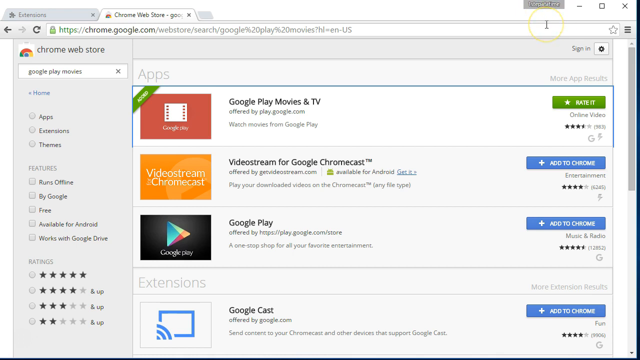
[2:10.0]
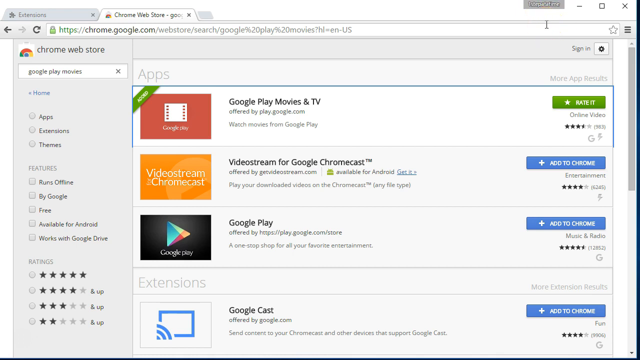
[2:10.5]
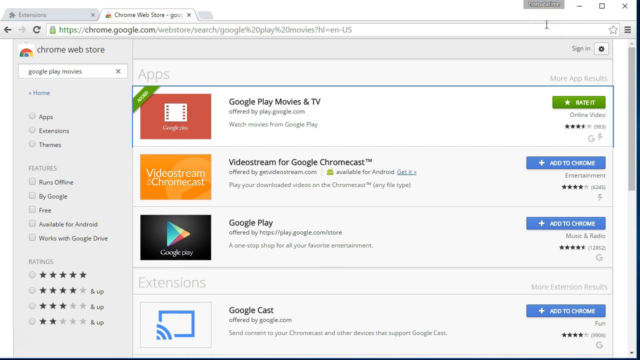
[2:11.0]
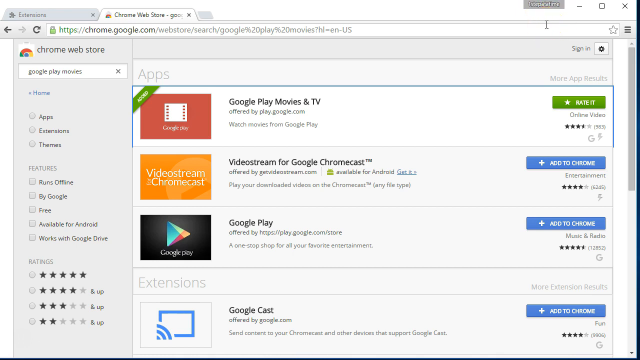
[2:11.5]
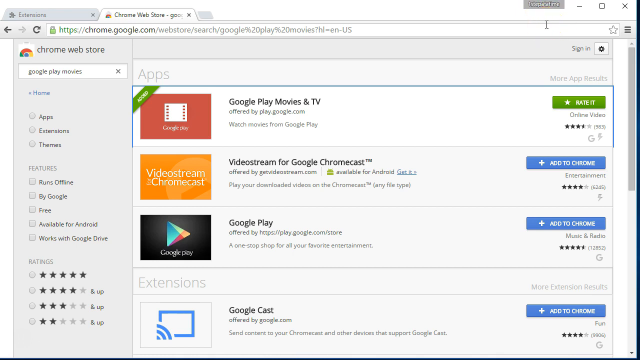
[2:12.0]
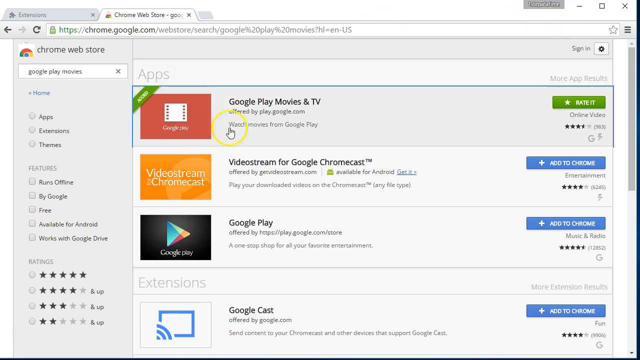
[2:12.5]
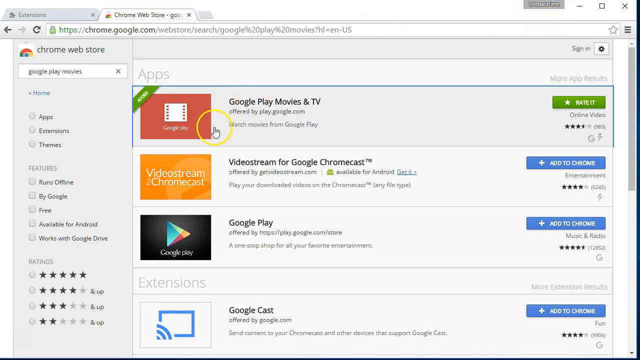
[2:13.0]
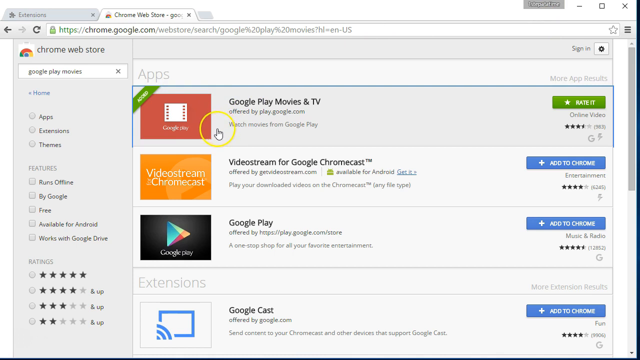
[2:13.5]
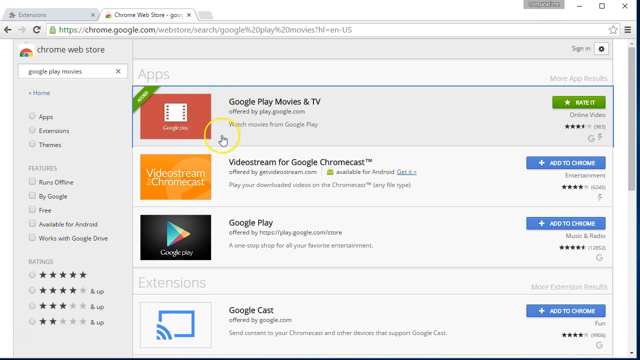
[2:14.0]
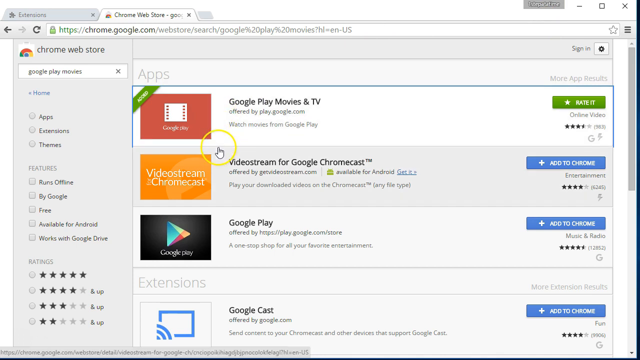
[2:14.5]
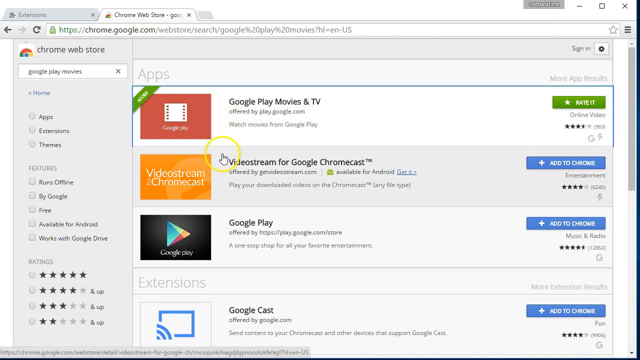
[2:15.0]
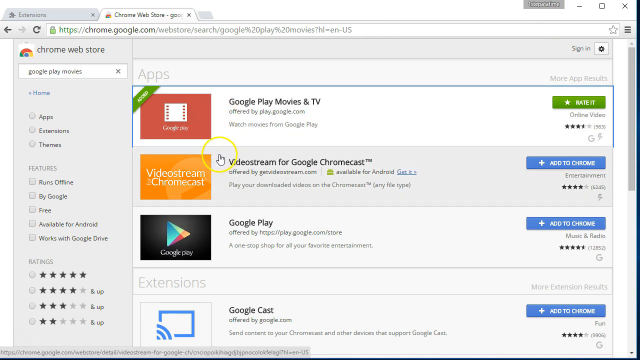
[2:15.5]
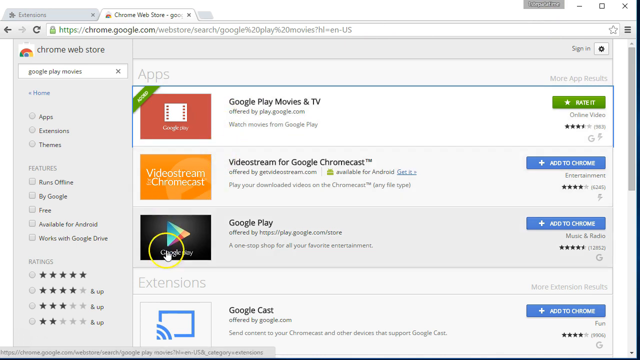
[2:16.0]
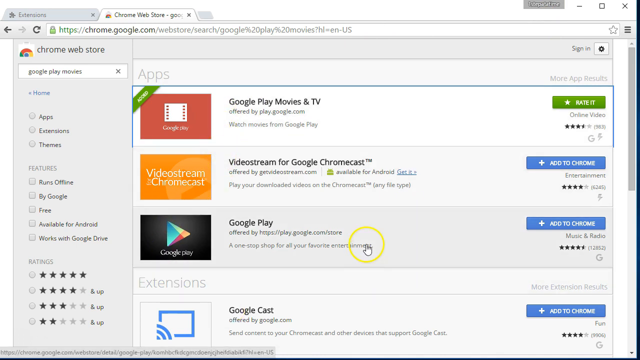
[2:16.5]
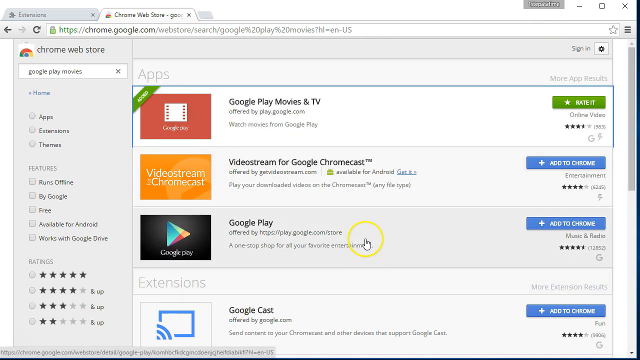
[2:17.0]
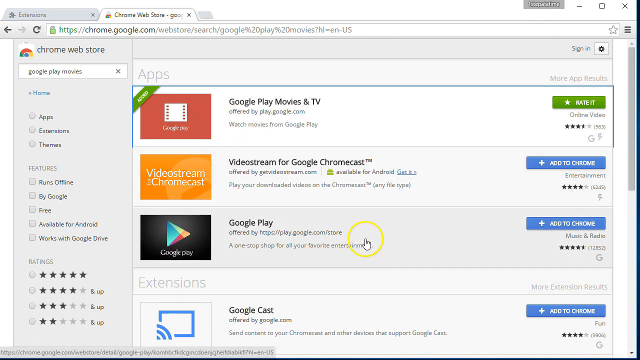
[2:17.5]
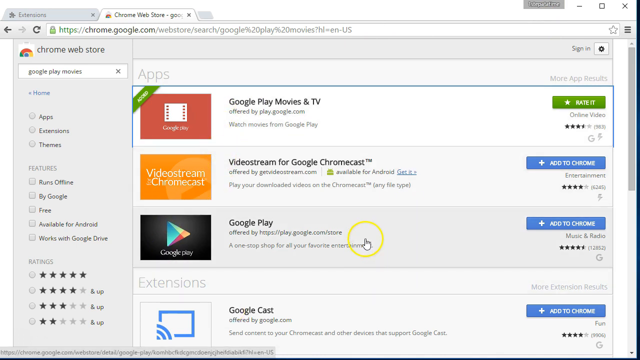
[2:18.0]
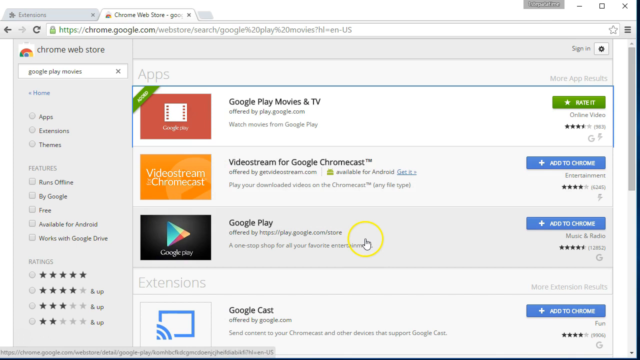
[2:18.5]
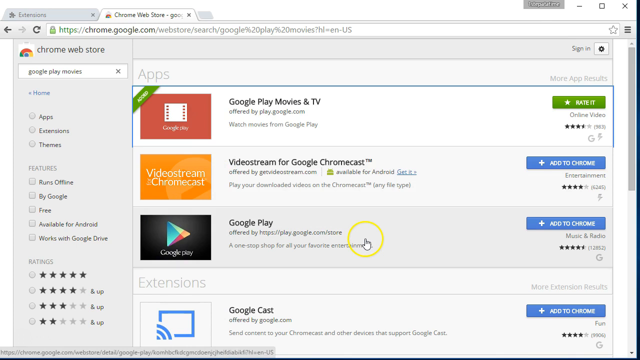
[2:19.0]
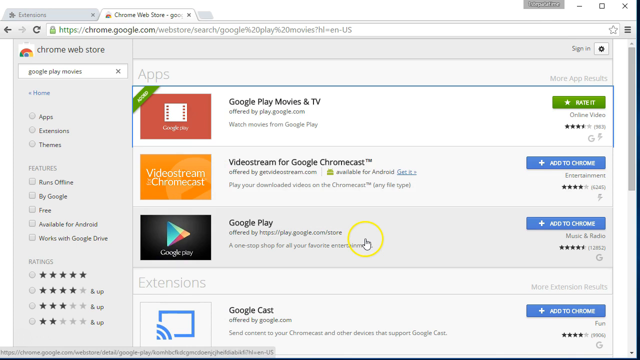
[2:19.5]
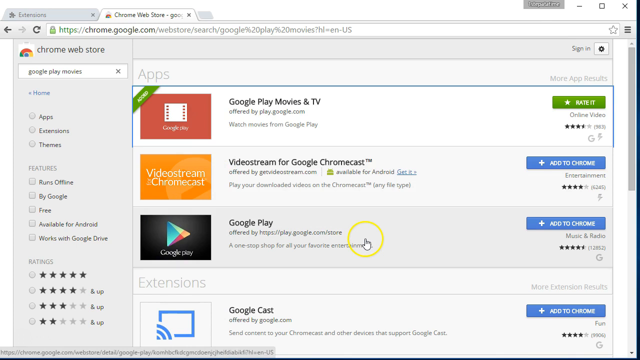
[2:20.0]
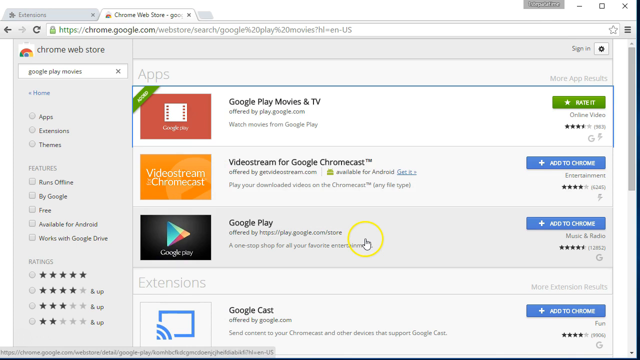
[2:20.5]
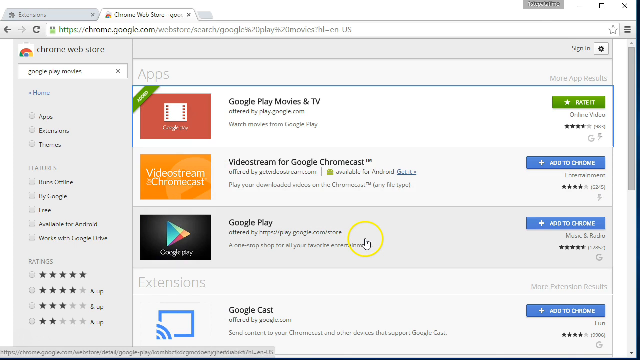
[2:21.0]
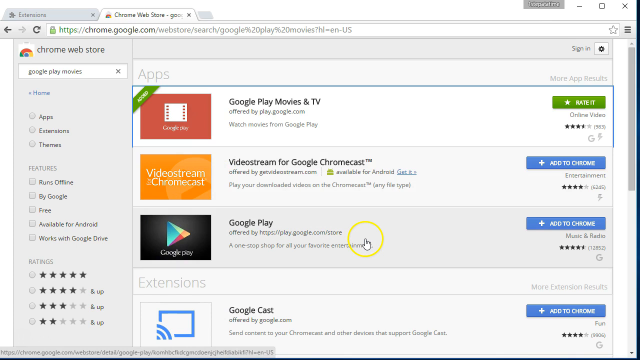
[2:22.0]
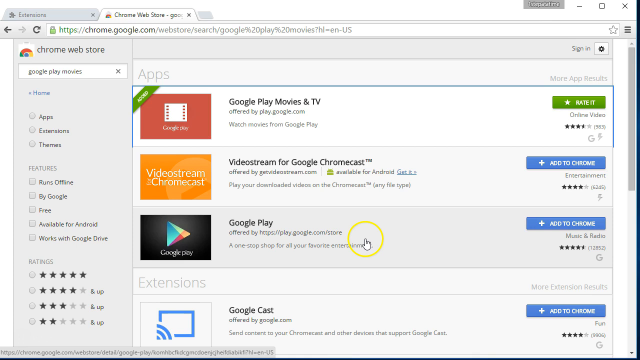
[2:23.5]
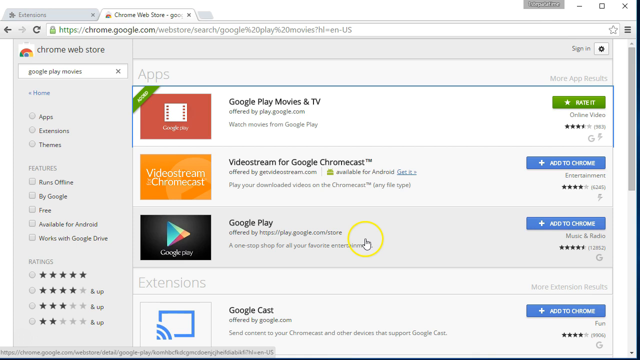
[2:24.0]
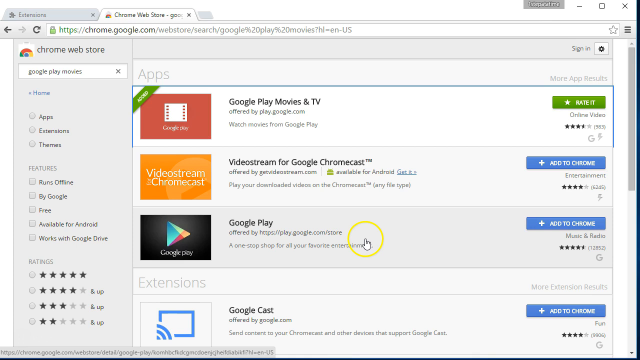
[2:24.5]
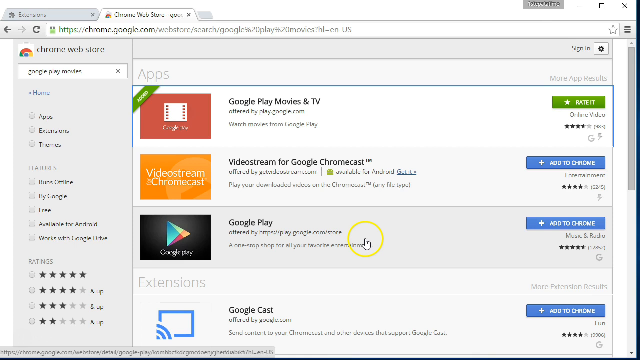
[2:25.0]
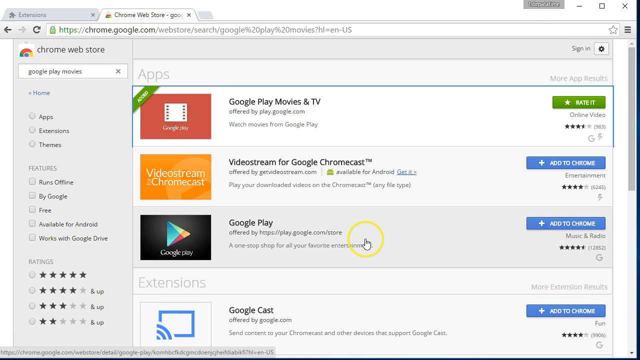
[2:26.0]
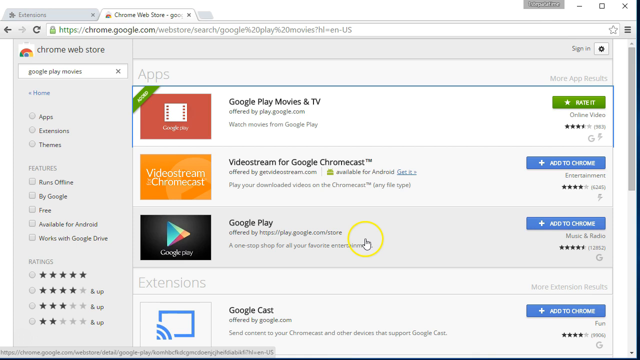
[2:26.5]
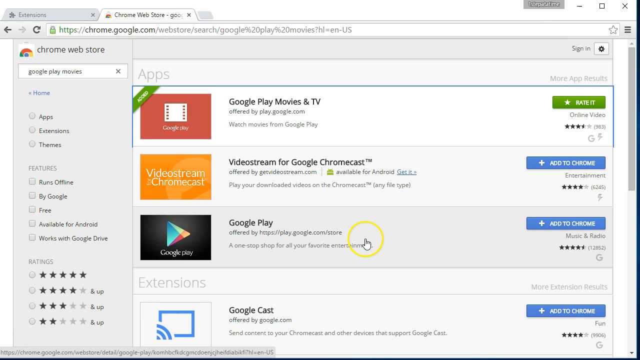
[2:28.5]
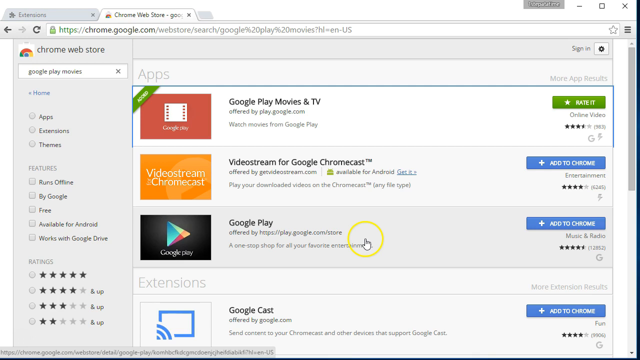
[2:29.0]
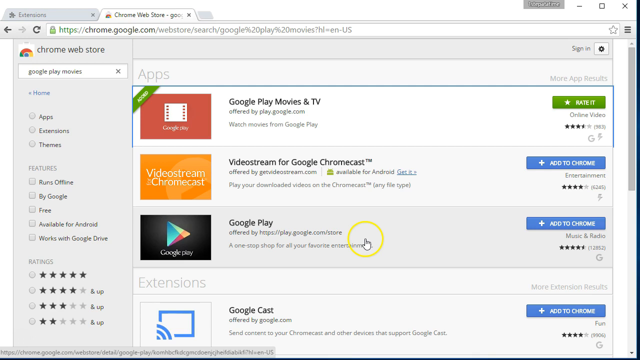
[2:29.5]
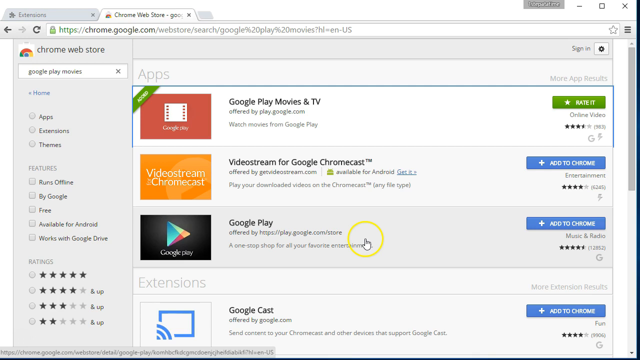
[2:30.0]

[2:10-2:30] The Chrome Web Store tab of a Chrome window is shown. On the left-hand side is a filtering menu with a grey background. At its top are the Chrome Web Store icon and label, with a search bar beneath. There are options to select apps, extensions, or themes, features regarding which other apps or platforms it works with, and at the bottom an option to select ratings from 5-star to 2-star. The apps are listed in boxes filling the width of the screen beside the menu. Three apps and one extension at the bottom are visible. The extension is Google Cast; the apps include VideoStream for Google Chromecast and Google Play Movies and TV. On the right-hand side of the Google Play Movies and TV box is a green button reading "Rated", with the current rating underneath. The other apps and extensions have a blue button with a plus for adding to Google Chrome, along with their category and current rating. Initially, the cursor shows as a text bar while hovering over the web address. It then moves down to the top app, Google Play Movies and TV, and turns into a hand as it hovers over it. Each time it moves, a yellow circle appears around it. The cursor circles aimlessly across the entire page, then stops on the Google Play link and remains there for the rest of the video.